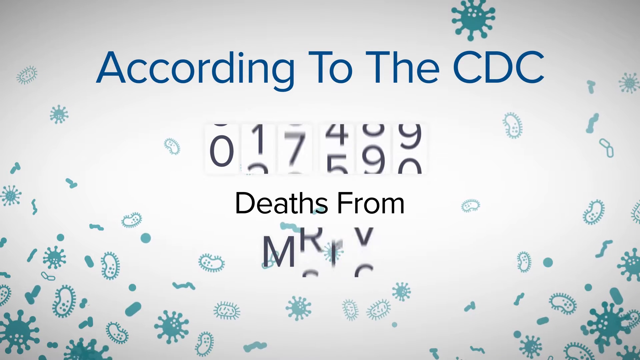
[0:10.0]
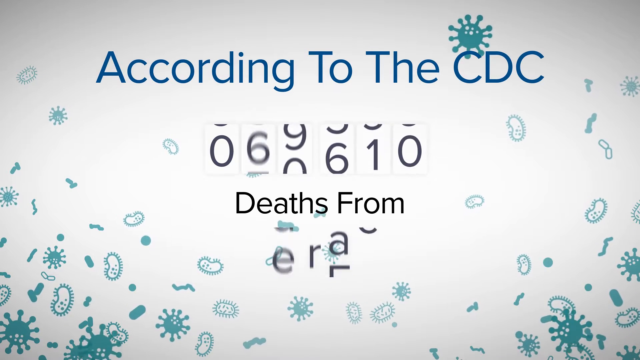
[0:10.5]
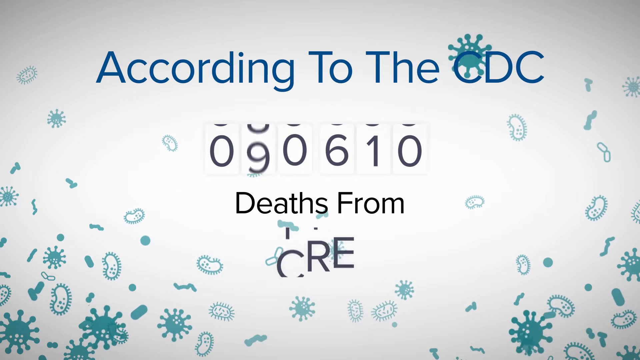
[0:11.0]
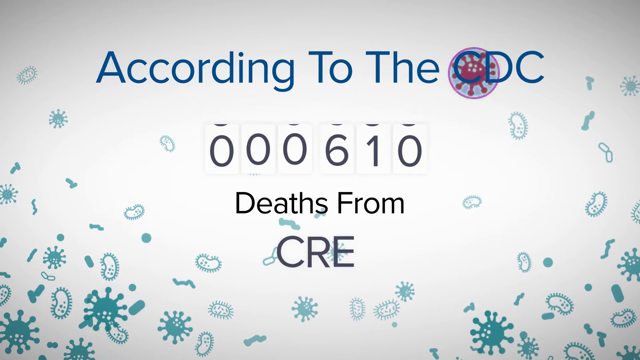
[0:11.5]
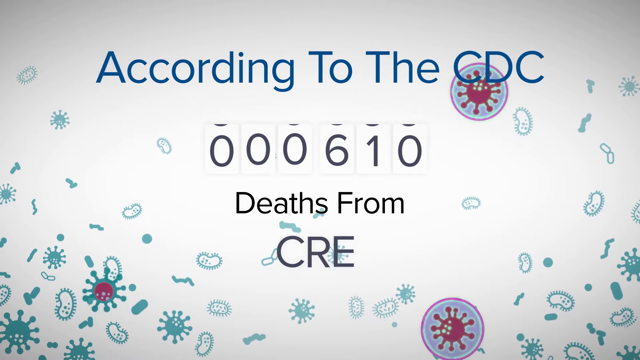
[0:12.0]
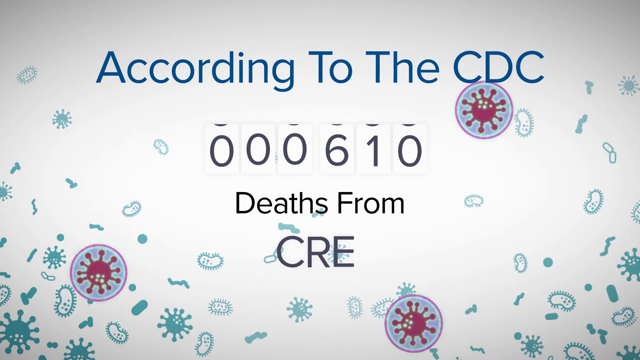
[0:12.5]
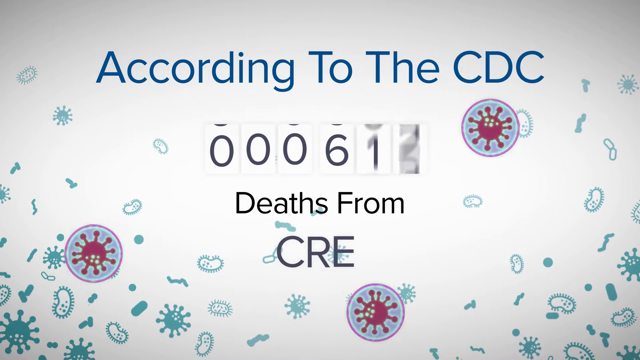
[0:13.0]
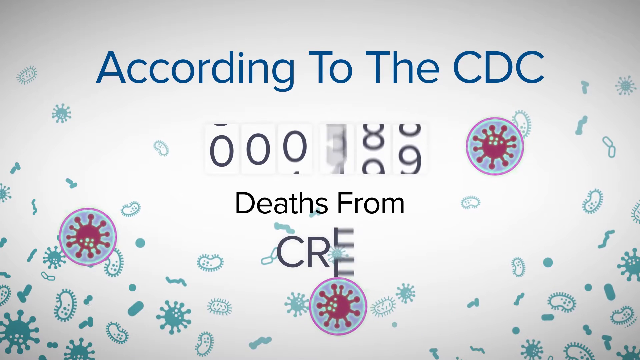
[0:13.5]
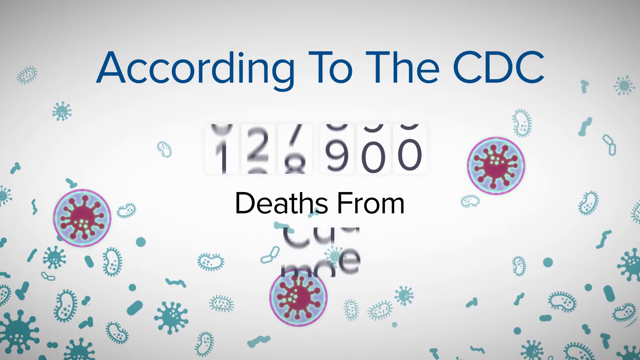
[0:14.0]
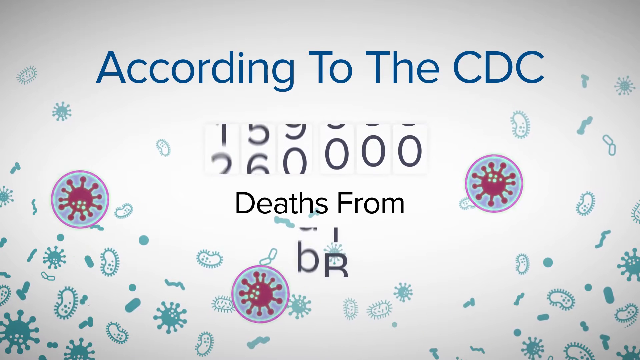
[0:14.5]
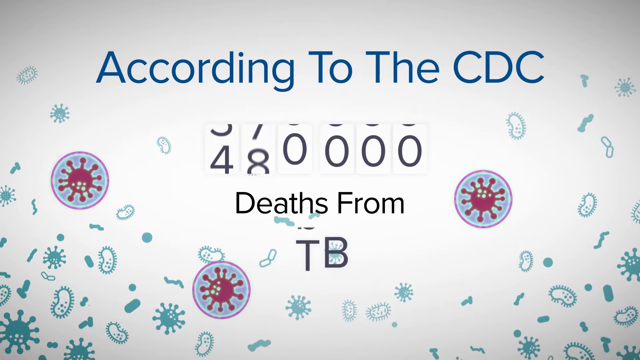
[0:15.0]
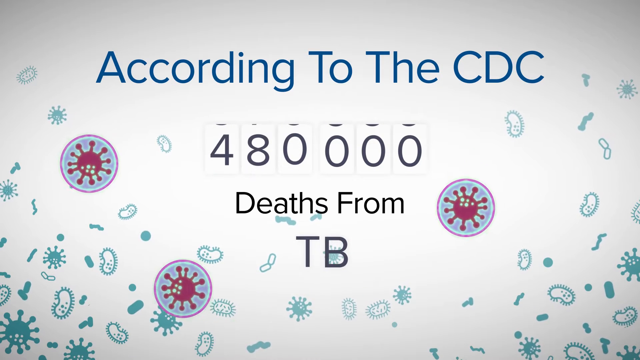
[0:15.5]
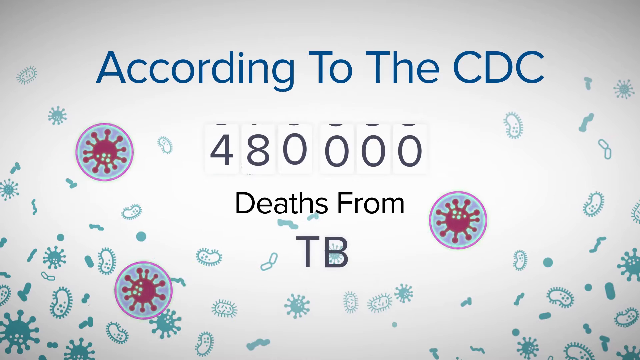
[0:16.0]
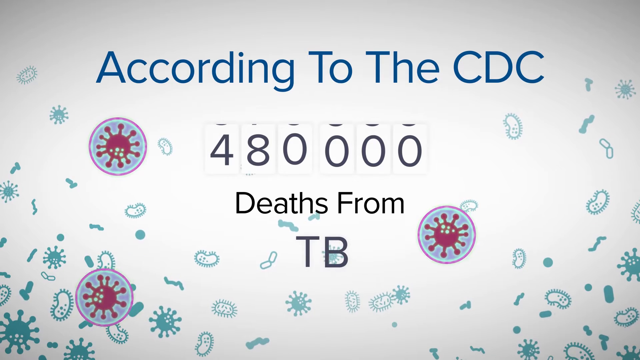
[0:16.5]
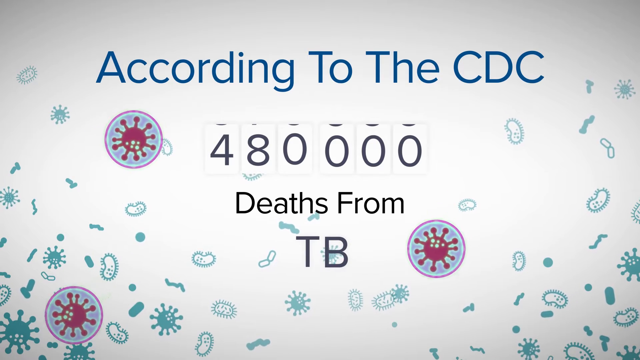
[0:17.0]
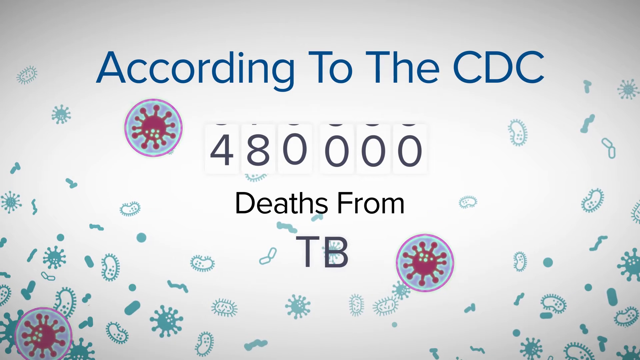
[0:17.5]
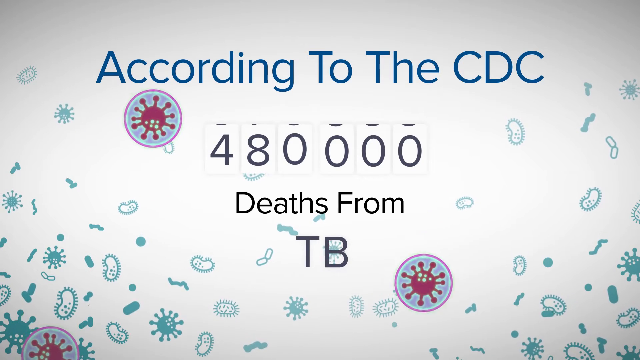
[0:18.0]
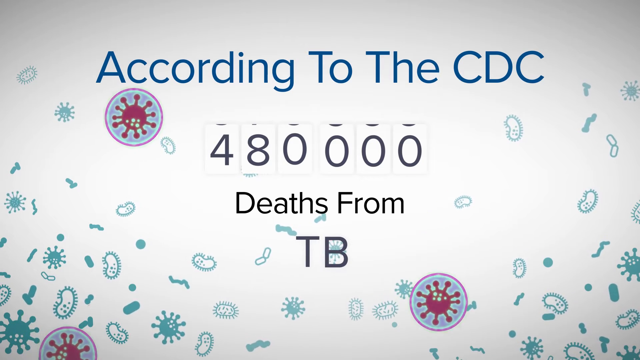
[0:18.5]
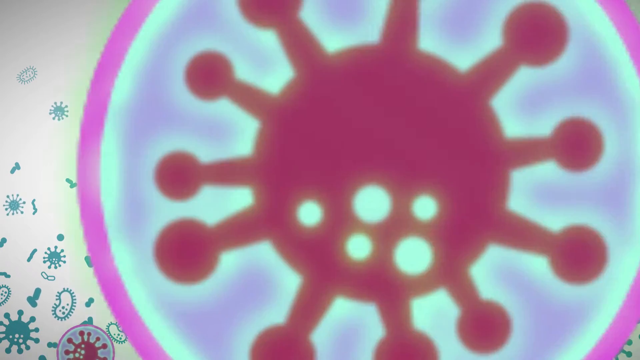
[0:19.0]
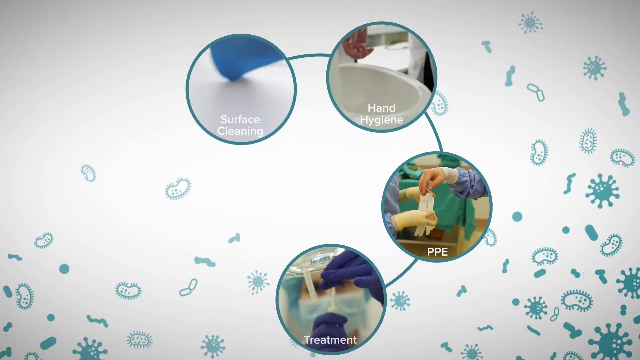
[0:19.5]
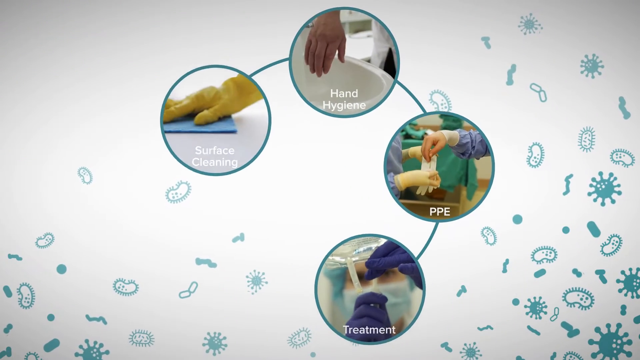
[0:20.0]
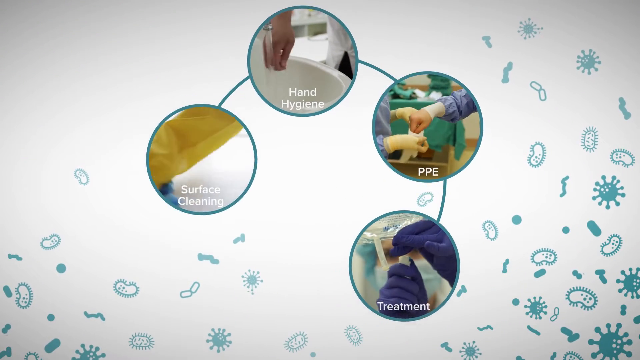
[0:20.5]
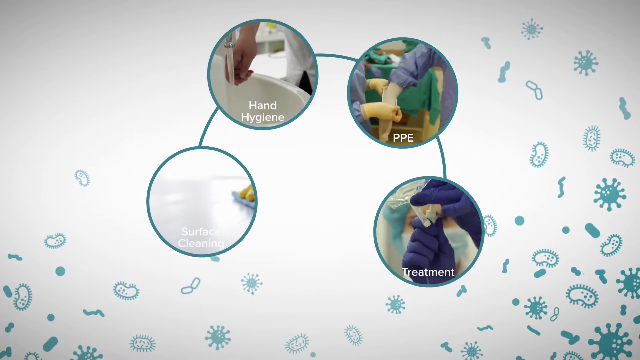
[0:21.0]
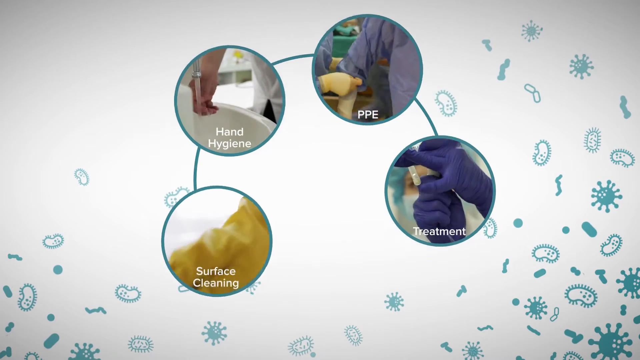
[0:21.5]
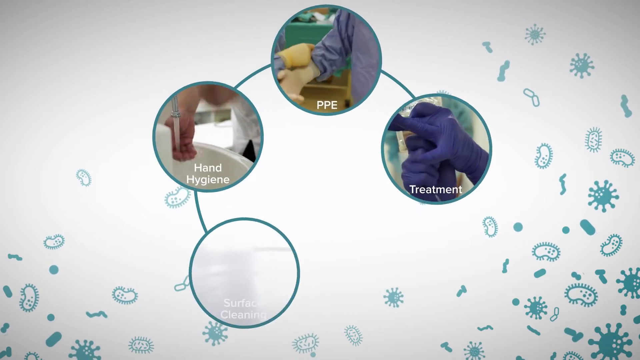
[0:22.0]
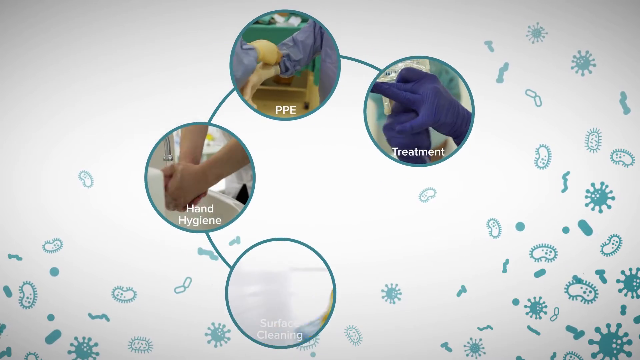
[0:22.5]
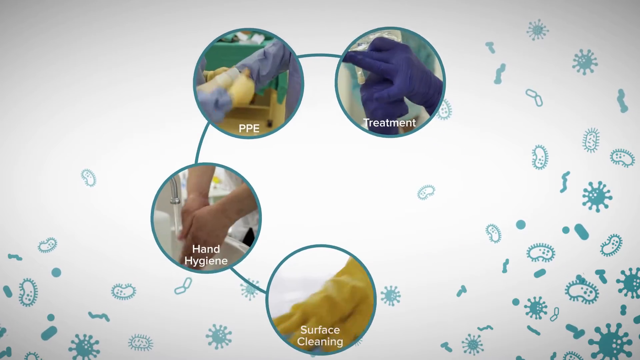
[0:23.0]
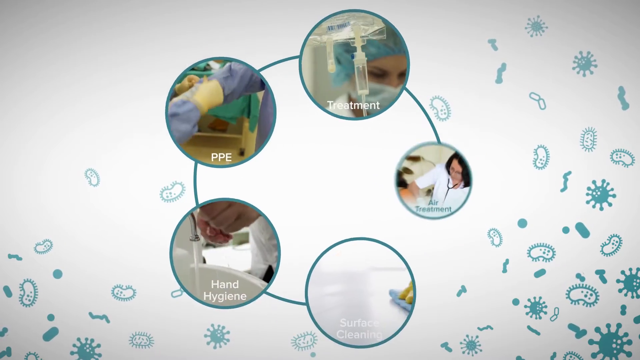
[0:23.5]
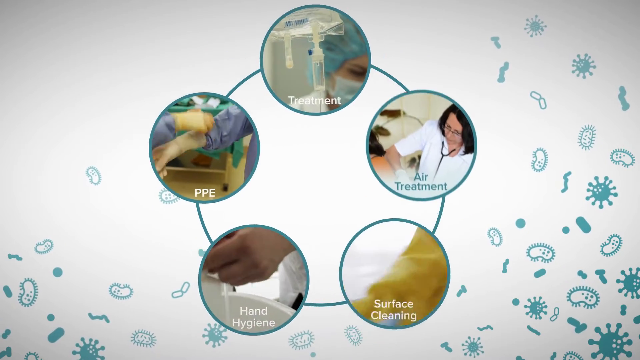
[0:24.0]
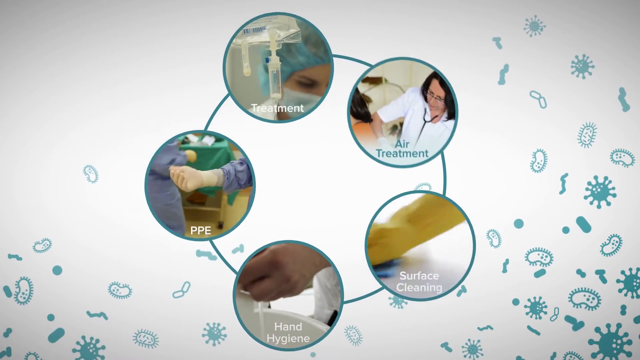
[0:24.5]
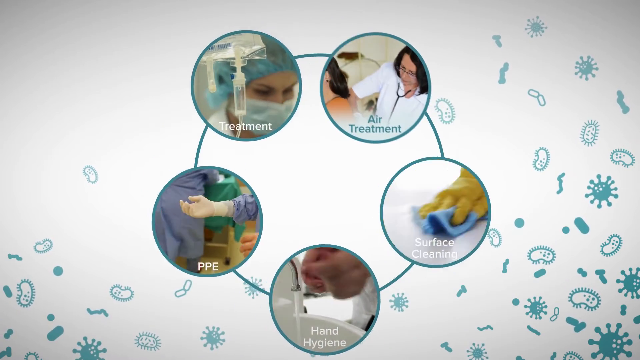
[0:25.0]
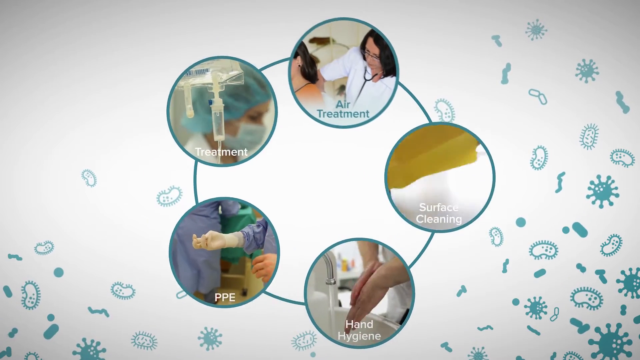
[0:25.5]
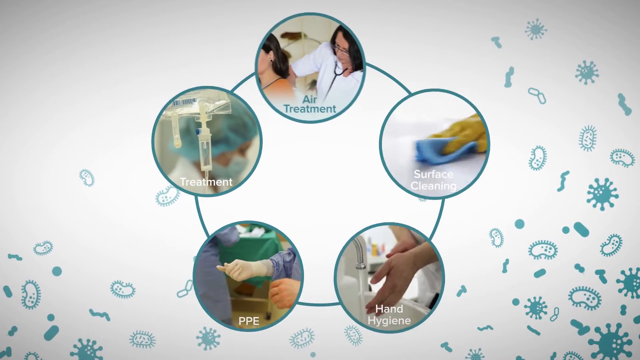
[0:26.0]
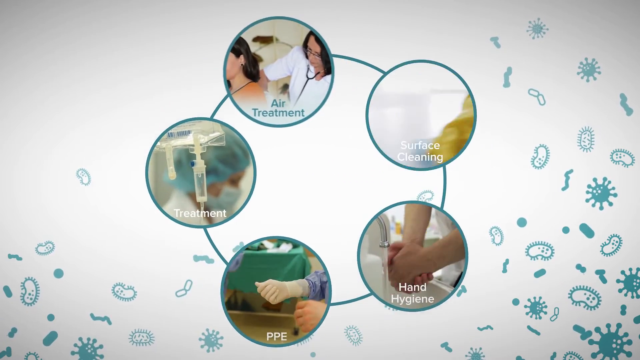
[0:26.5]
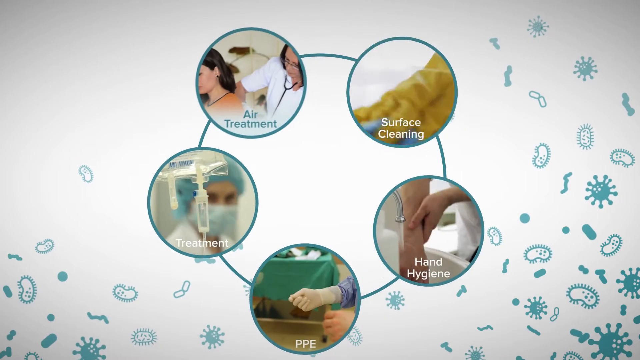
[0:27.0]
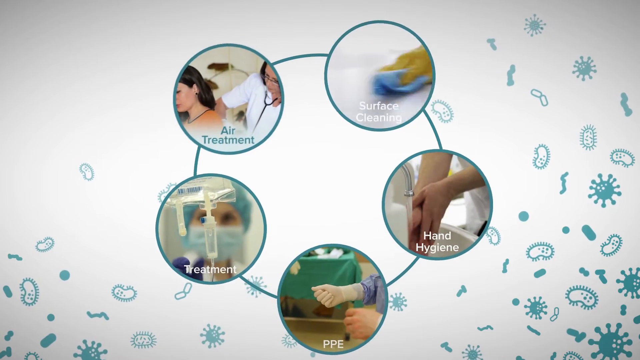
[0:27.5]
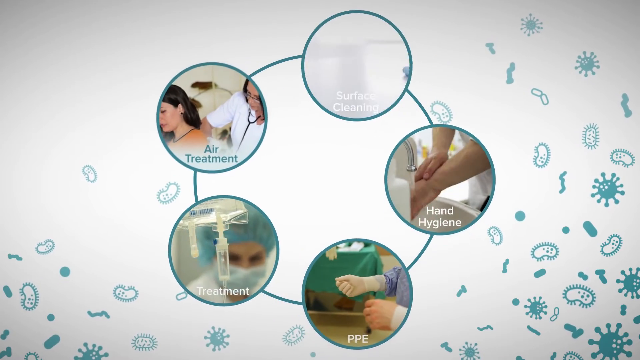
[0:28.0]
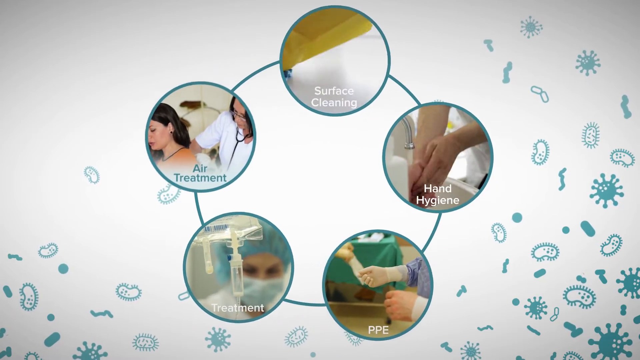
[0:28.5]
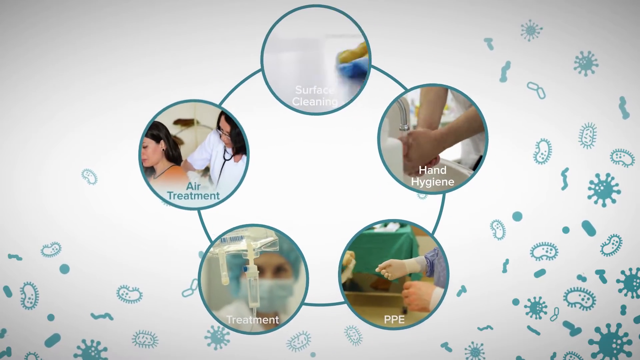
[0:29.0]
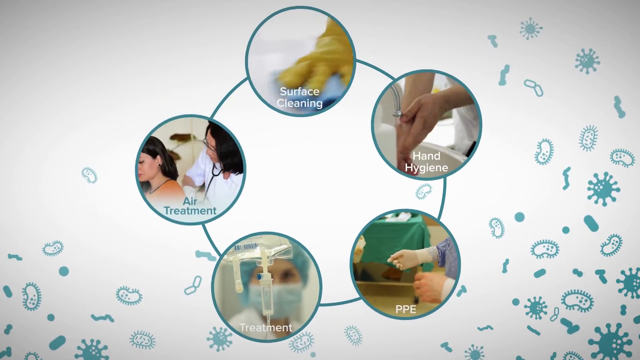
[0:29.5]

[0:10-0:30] The same pattern continues: "according to the CDC" stays unchanged at the top, and each time a new cause of death comes up, the number scatters before settling. The next one reads "610 deaths from CRE." Besides the teal viruses, there are three different spheres. One almost looks like COVID-19: a red, maroon ball with little stems that end in little balls, seemingly inside a protective bubble whose outer layer is the same pinkish red as the ball in the middle. Then the count goes to "480,000 deaths from TB." The spheres move fairly quickly and bounce around, and one moves to the left and out of the picture for a moment. The scene then changes to a new screen with the same kind of white background and the viruses. Four connected spheres show different things: surface cleaning, with a picture of someone scrubbing with gloves; hand hygiene, with a hand dripping; PPE, with someone putting on gloves; and treatment. They move around in a counterclockwise direction, with a line that holds them all in place, and they are animated with video inside. There is an air treatment sphere showing a woman with some kind of utensil around her ear, and other videos show a nurse in scrubs and people doing different treatments, all in the medical field.